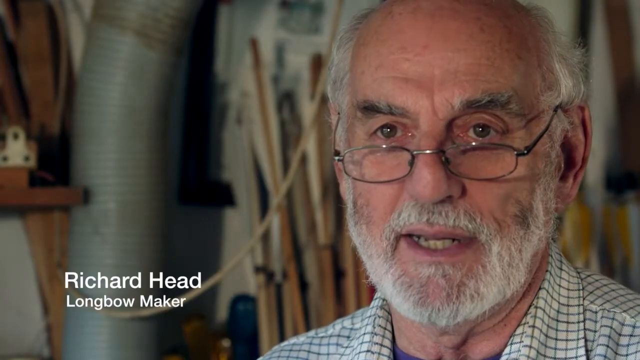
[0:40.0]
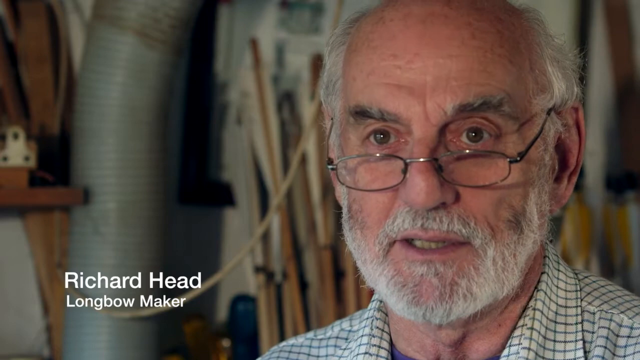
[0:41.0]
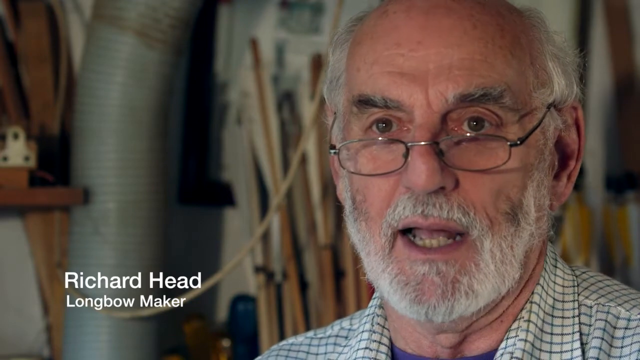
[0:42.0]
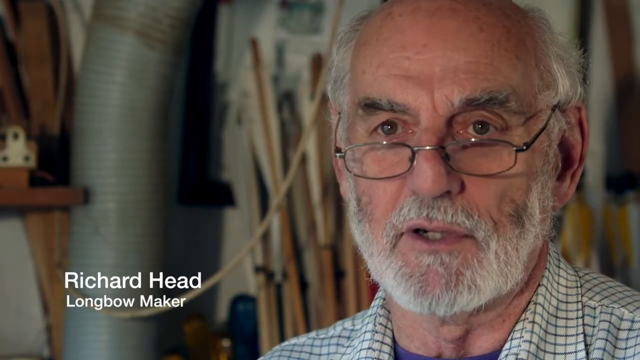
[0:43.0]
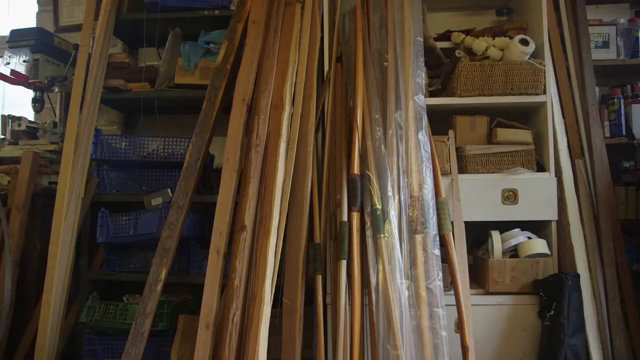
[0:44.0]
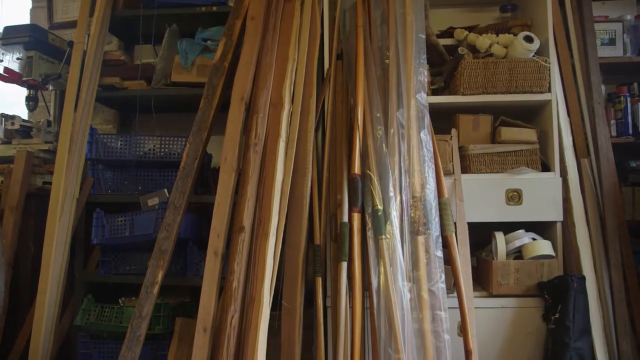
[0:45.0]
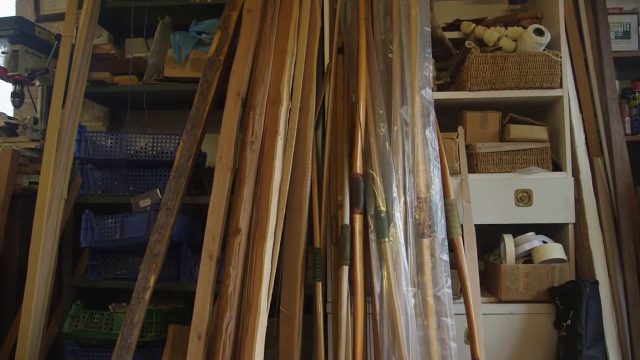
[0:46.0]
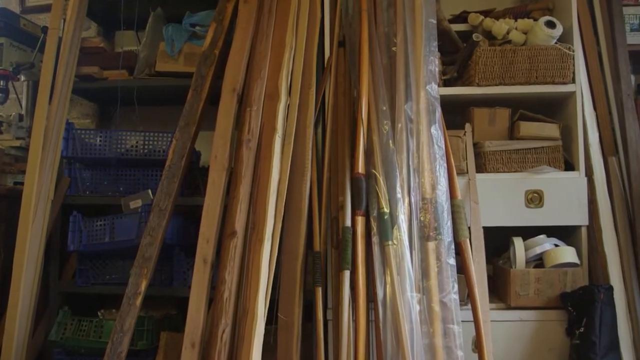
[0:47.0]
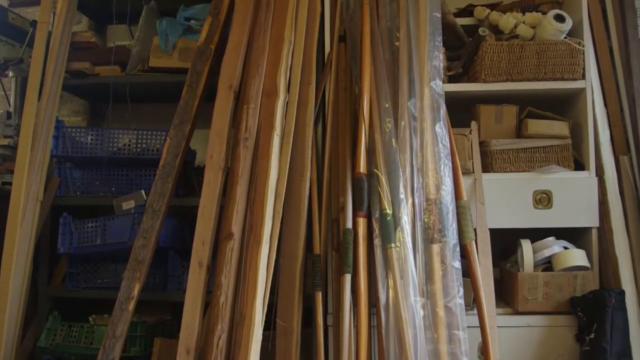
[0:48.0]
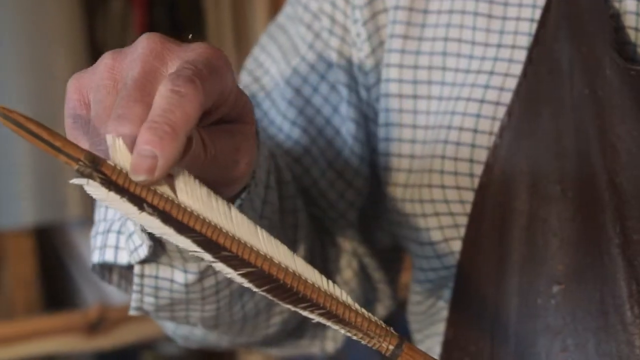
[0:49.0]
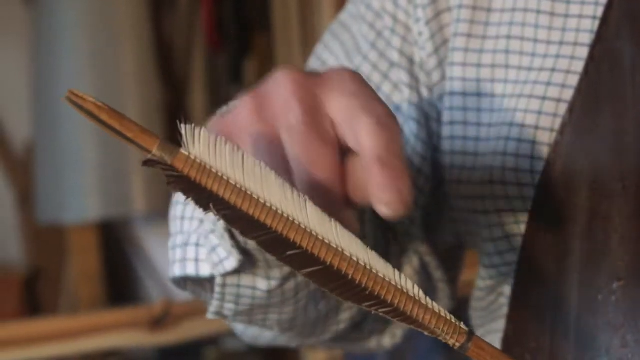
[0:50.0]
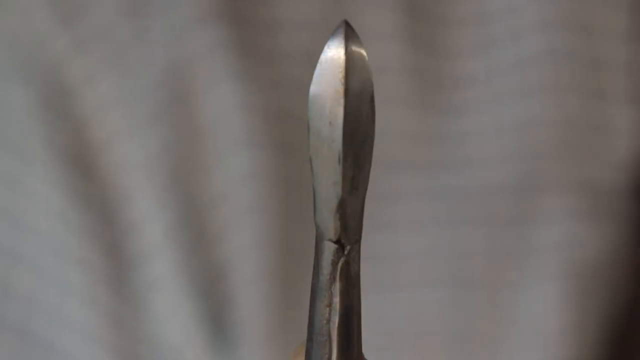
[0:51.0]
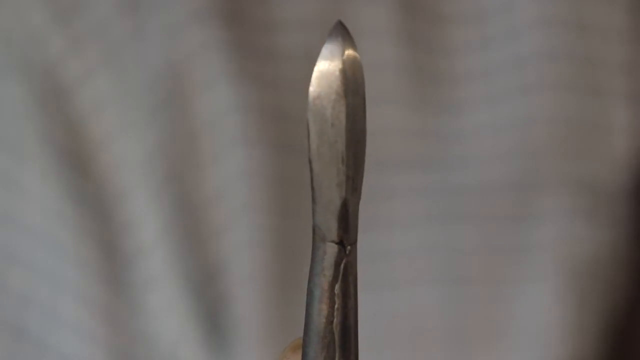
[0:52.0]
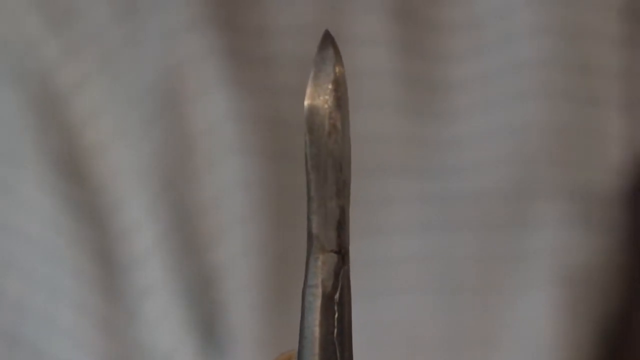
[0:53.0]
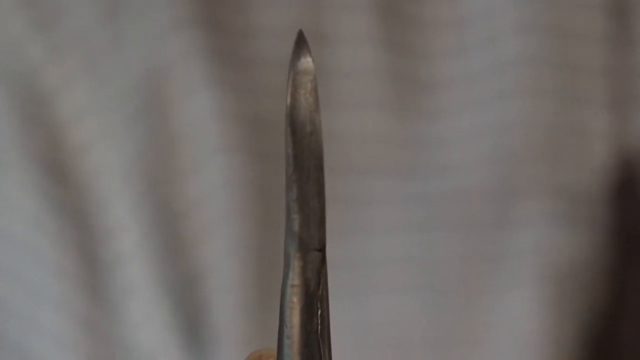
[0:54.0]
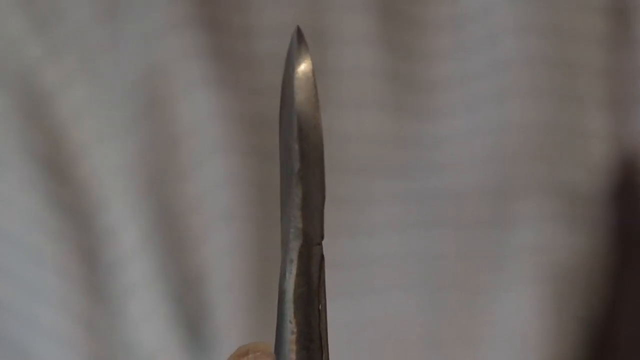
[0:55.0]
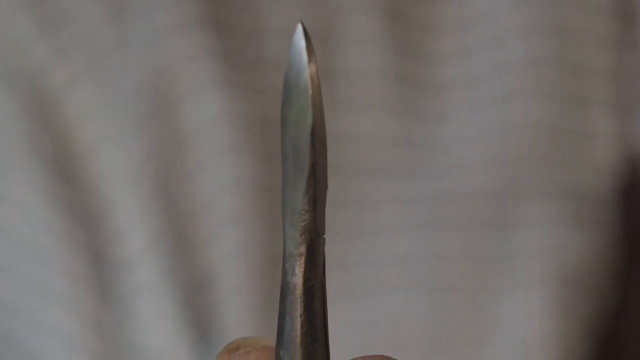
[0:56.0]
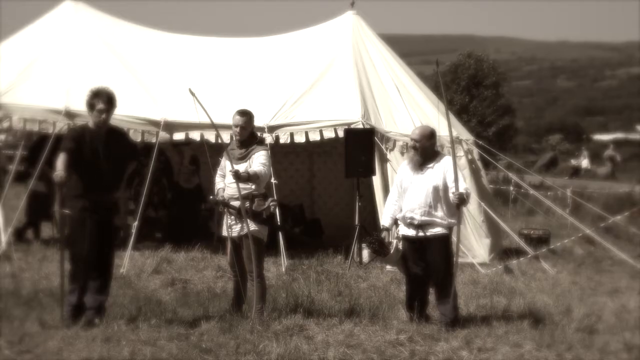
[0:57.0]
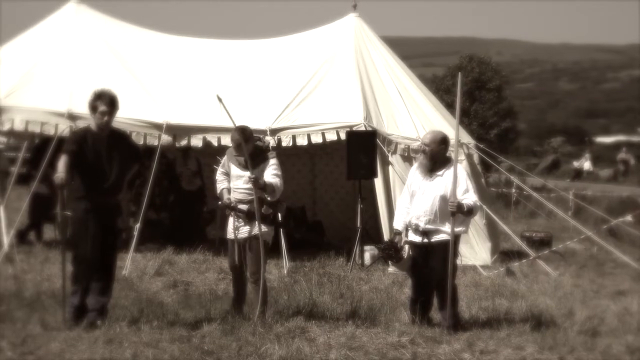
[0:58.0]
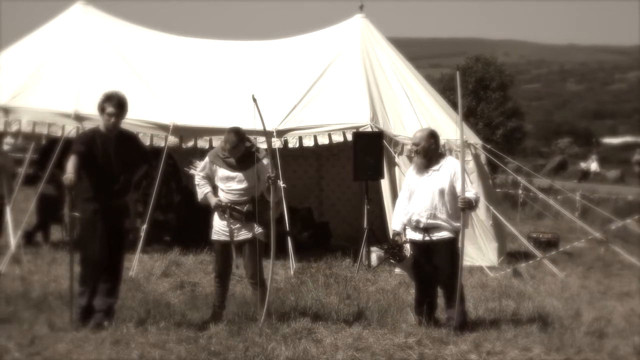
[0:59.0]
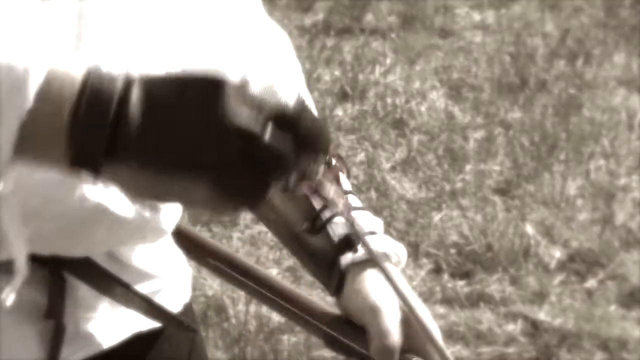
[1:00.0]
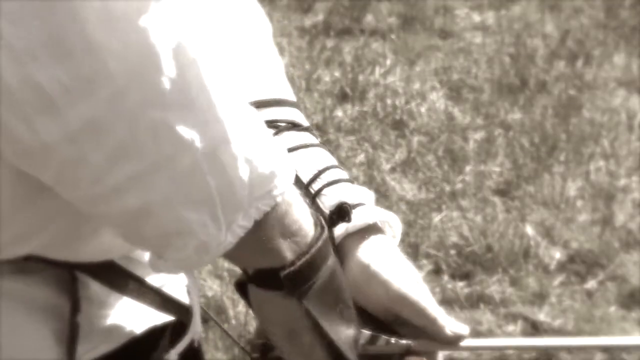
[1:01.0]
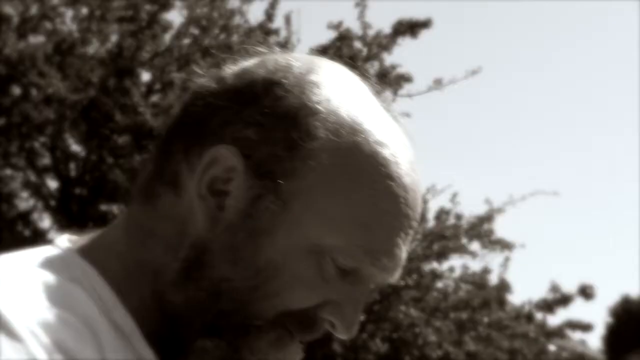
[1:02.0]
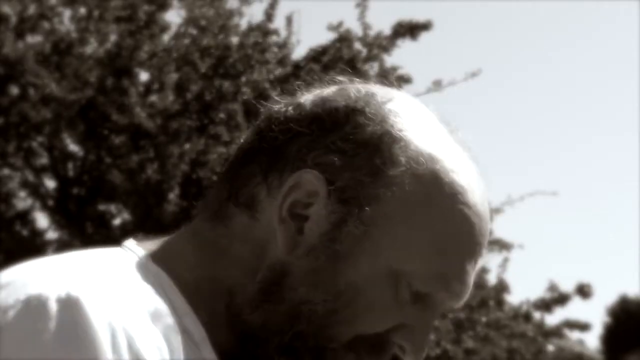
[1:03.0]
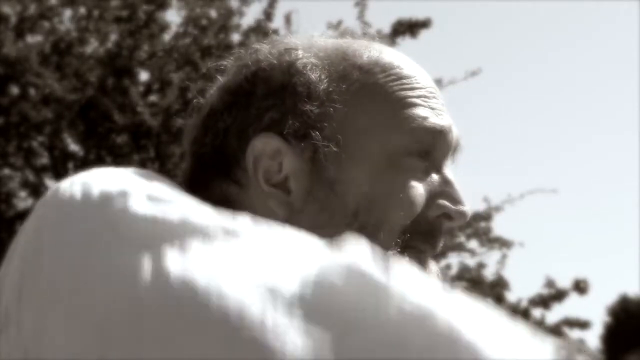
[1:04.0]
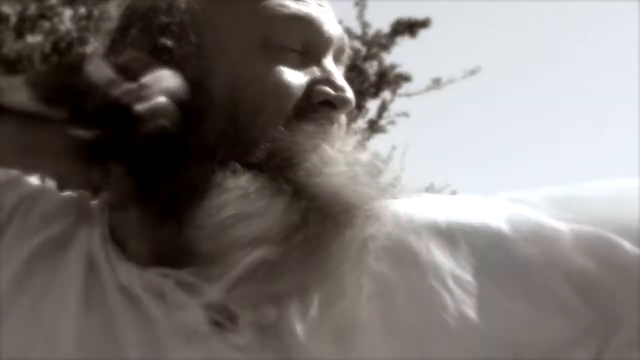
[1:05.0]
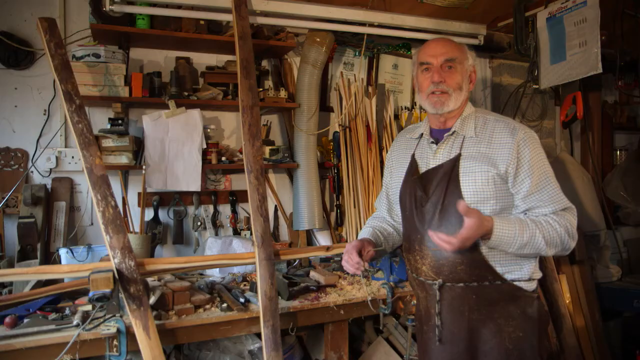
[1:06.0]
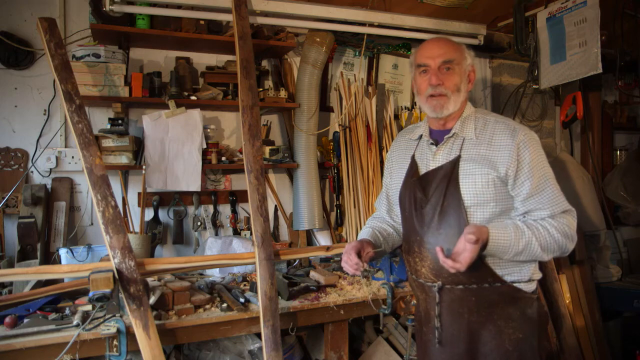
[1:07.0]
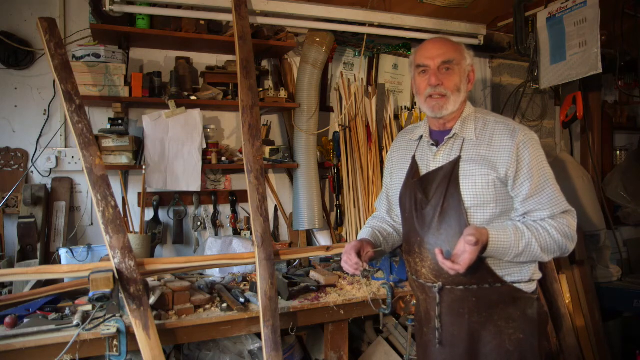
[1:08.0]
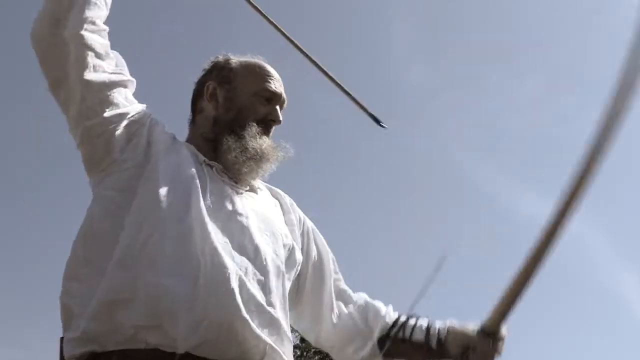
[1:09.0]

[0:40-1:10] An older man gives an interview. He has a gray beard and mustache and gray hair on either side of his bald head, and he looks over reading glasses straight toward the camera. His head takes up the right side of the screen, with his workshop on the left. In the bottom left corner he is labeled in white text: "Richard Head Longbowmaker". He talks and moves his eyebrows up and down expressively. The camera cuts to his workshop, where multiple unstringed longbows are piled up and leaning against a shelf and workbench, and slowly pans into the center of this bundle of longbows. It then cuts to Richard Head holding an arrow, rubbing his right index finger against the feathers attached to the bottom of the arrow. Next comes a shot of the arrow's oval-shaped, pointed arrowhead, pointing upward as it is slowly spun from left to right. The video then cuts to a modern-day recording with a black and white filter, in which three men in front of a white medieval-style tent load crossbows with arrows and prepare to shoot.